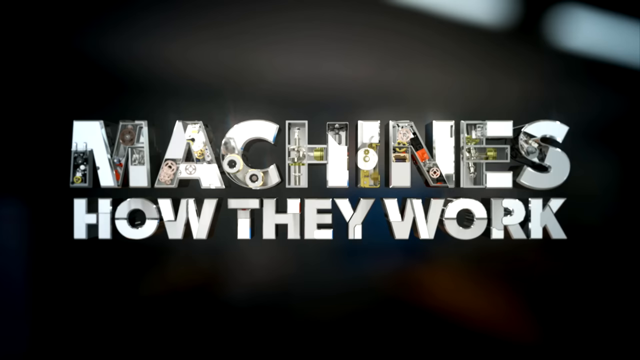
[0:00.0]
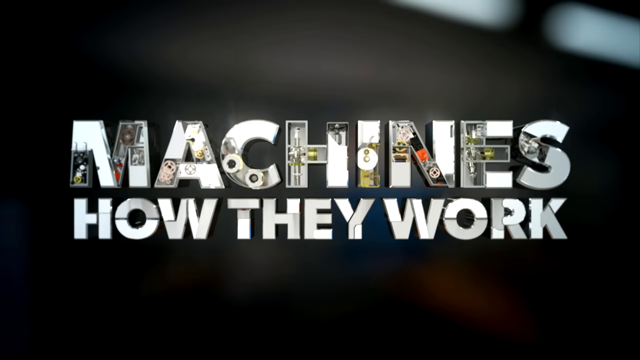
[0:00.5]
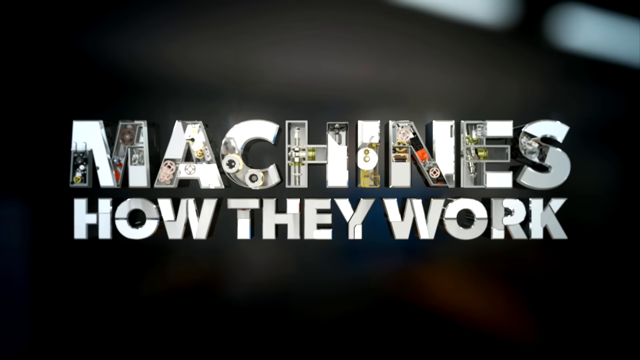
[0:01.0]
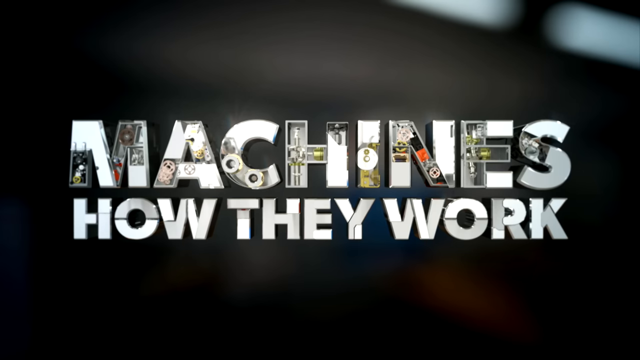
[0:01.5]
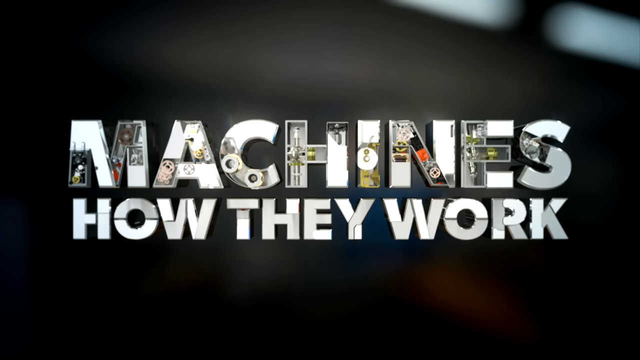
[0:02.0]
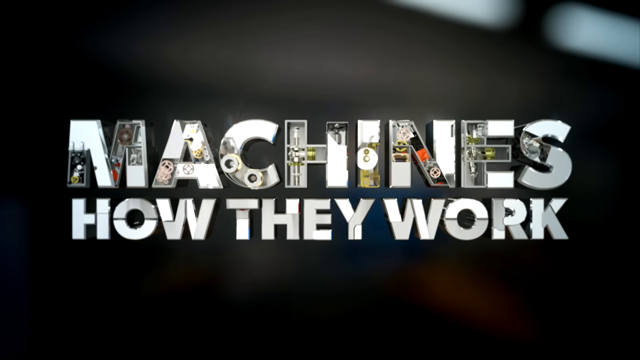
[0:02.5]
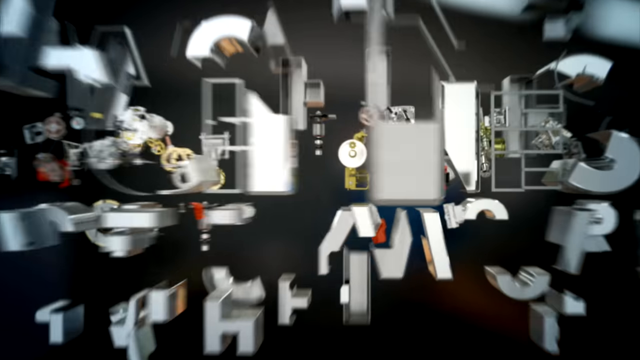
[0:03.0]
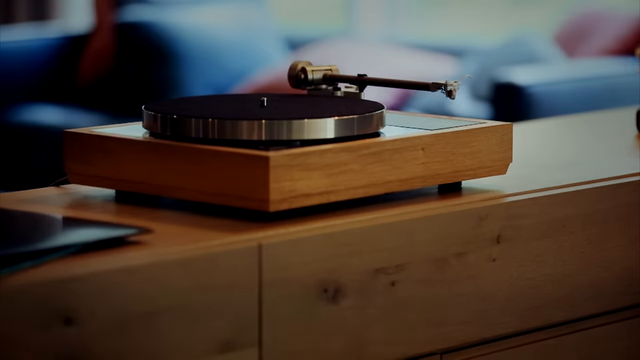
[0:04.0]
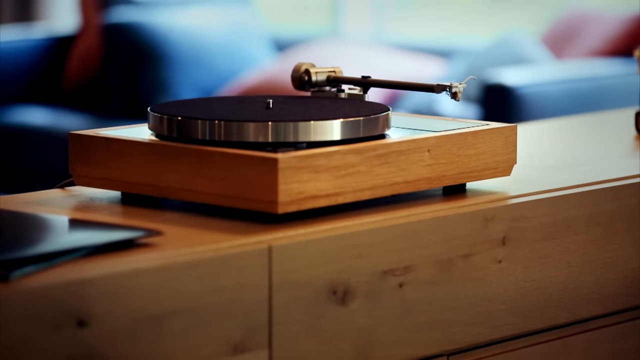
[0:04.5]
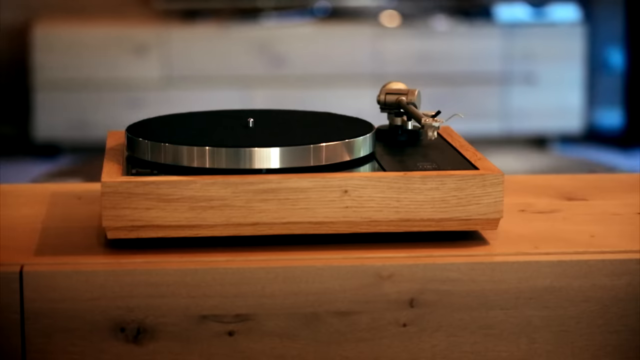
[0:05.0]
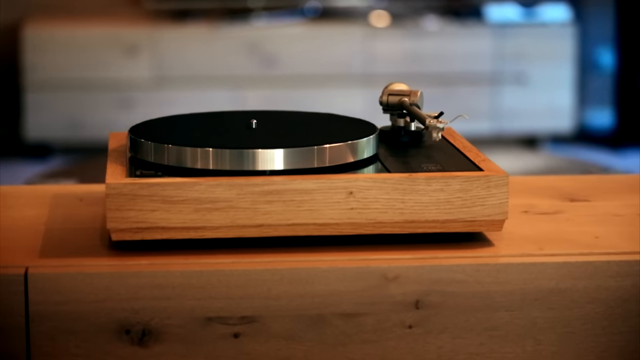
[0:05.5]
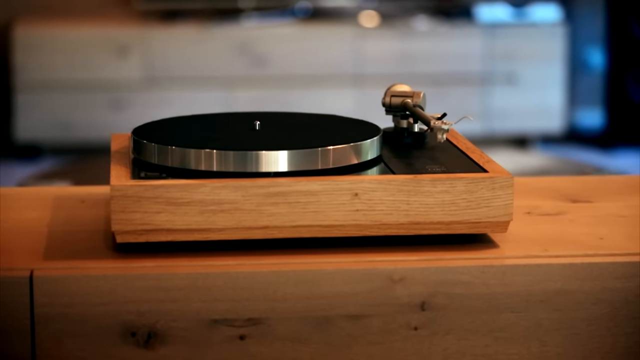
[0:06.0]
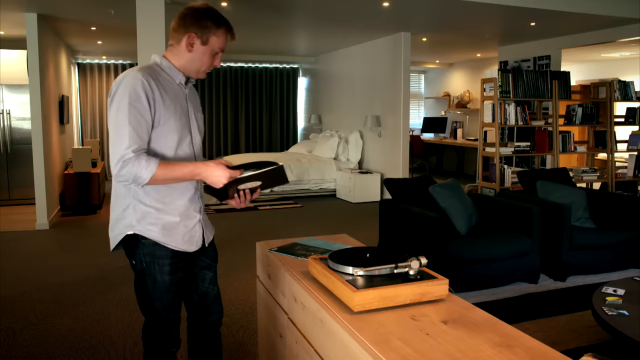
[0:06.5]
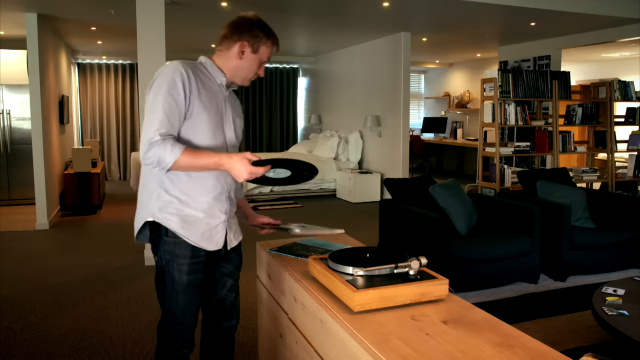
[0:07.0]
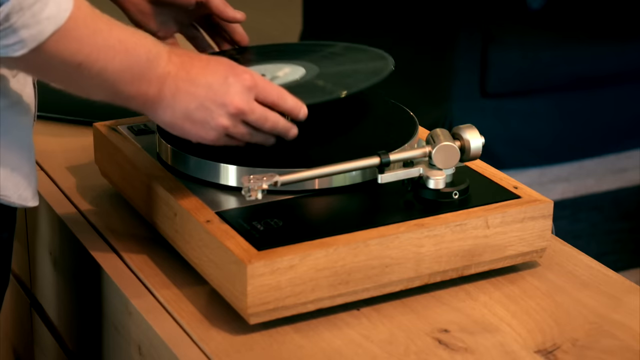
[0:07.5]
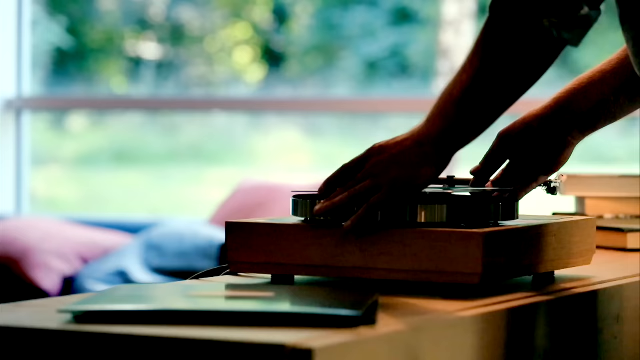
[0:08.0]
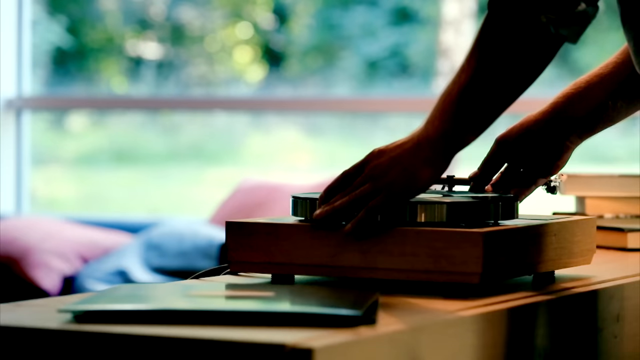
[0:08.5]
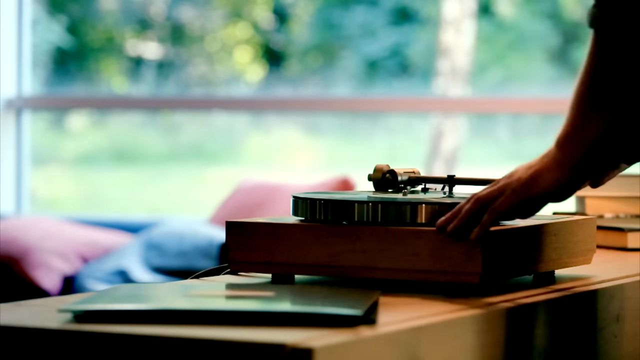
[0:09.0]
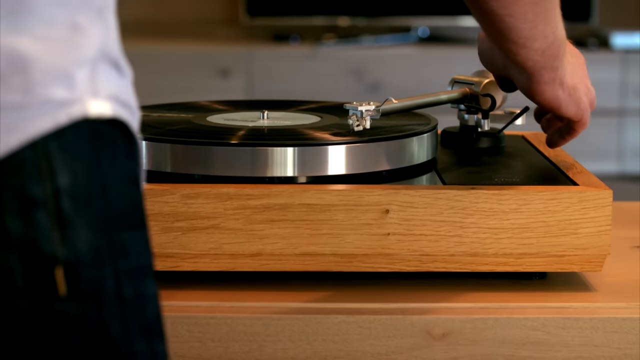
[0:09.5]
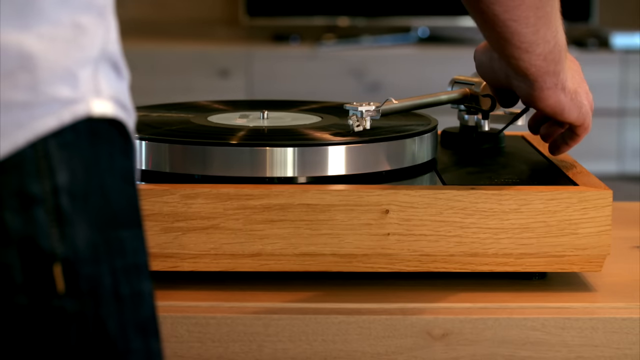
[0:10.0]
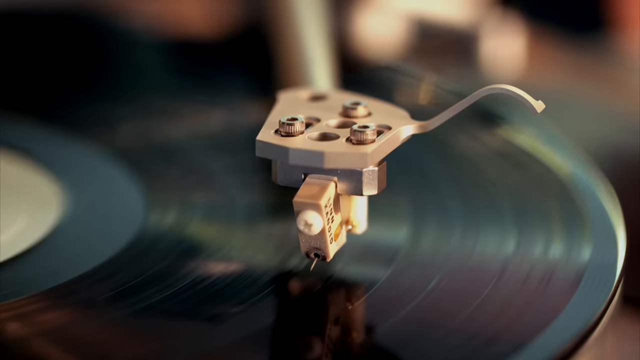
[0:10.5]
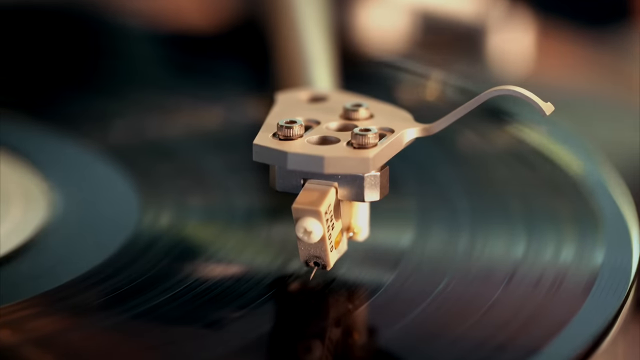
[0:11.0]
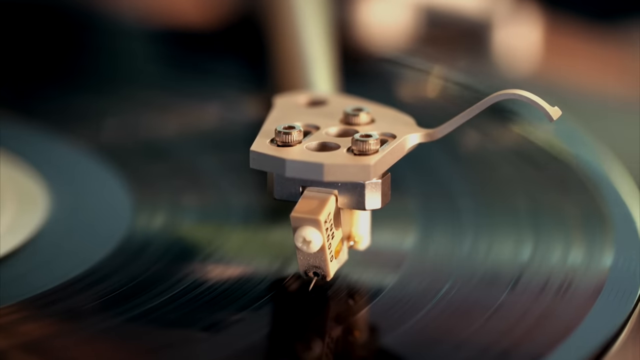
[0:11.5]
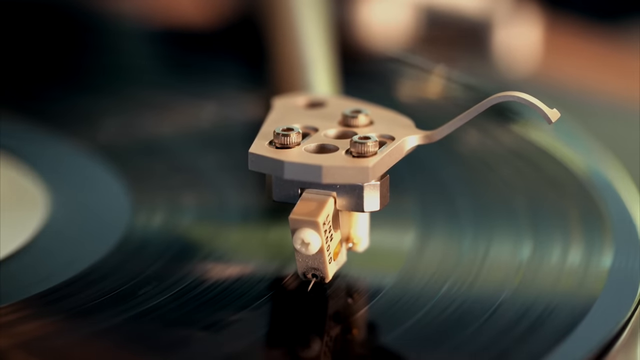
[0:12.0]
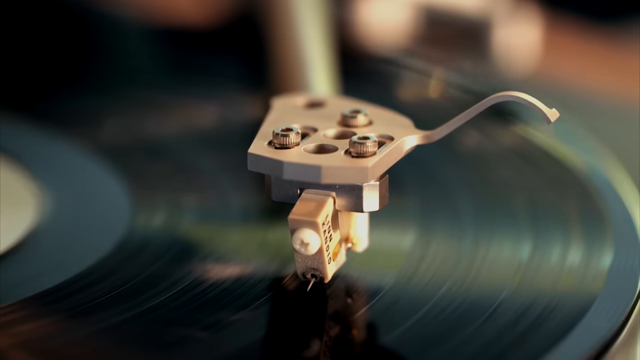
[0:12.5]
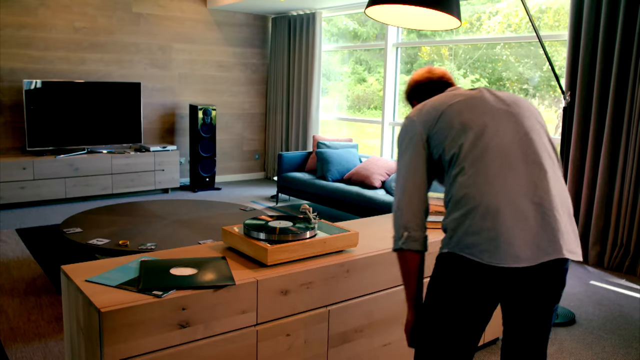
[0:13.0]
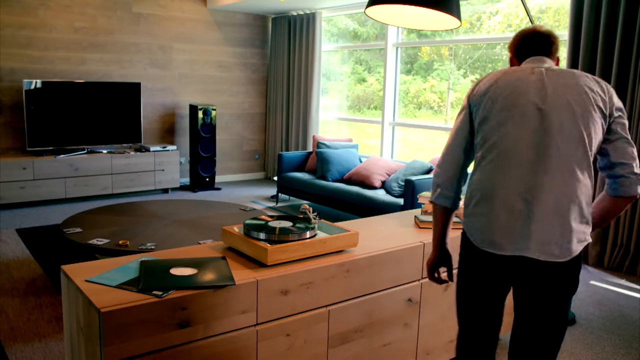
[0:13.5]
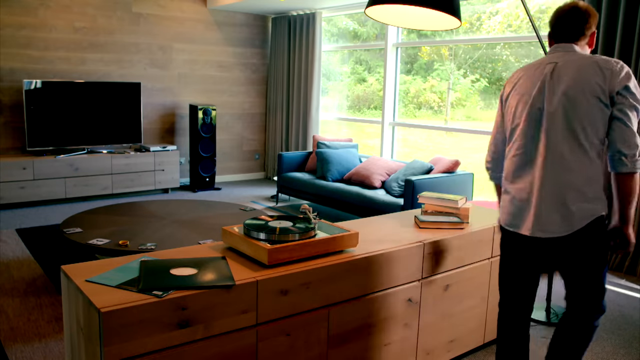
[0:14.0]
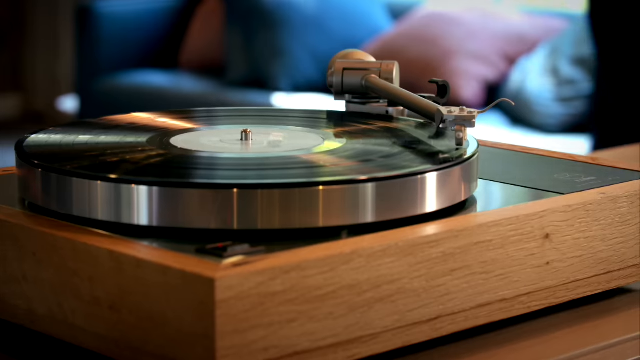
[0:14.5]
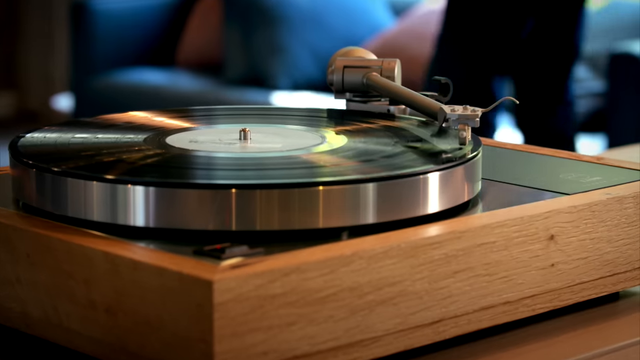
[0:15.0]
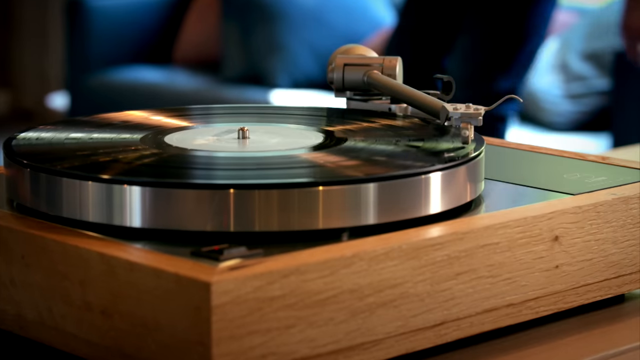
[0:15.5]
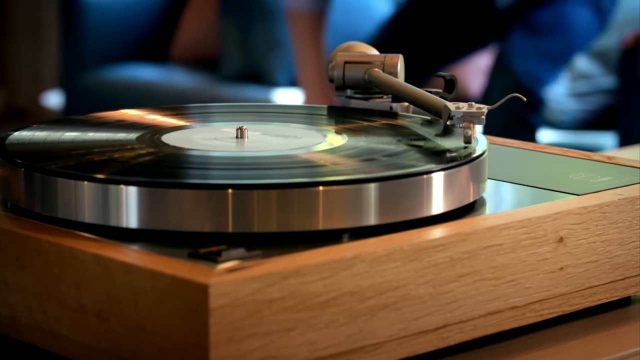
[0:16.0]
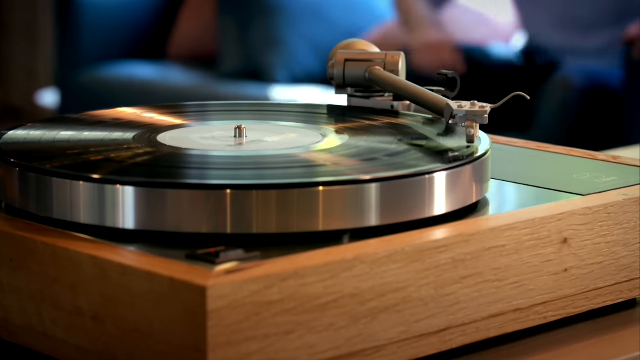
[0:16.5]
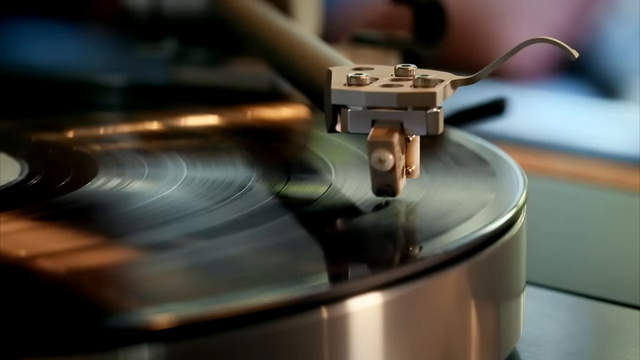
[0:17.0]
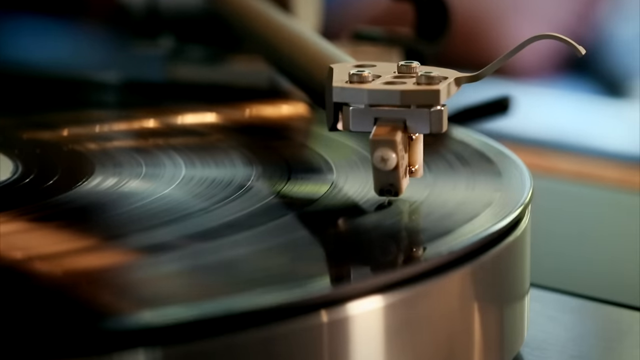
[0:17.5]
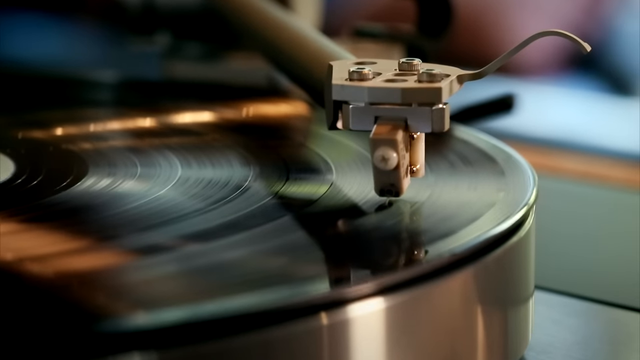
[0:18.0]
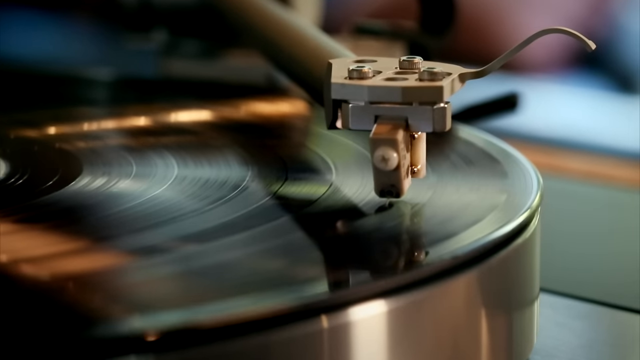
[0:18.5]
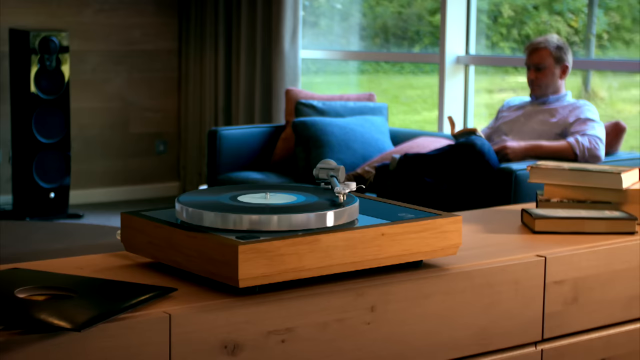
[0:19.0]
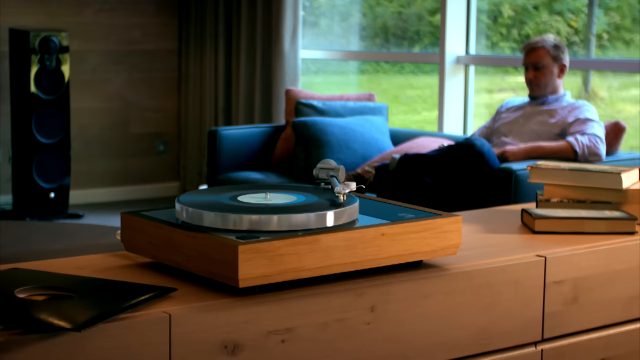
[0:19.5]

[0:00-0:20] The video begins with an animated title intro reading "machines how they work," styled with some sort of machinery design inside the lettering. It then transitions to machines breaking down to show their insides, next to a modern-looking countertop with a modern-looking record player on top of the counter, inside a simple, minimalist, modern-looking home. A man places a record on the record player and starts it playing, then walks away and sits on a couch in a modern living room, reading a book while the record player plays. The record player is then expanded, showing all the intricate details and machinery inside it. The lighting in the room is very dim, there are windows showing the outside, and the furniture and decor seem to be those of a modern minimalist living room with very warm colors.